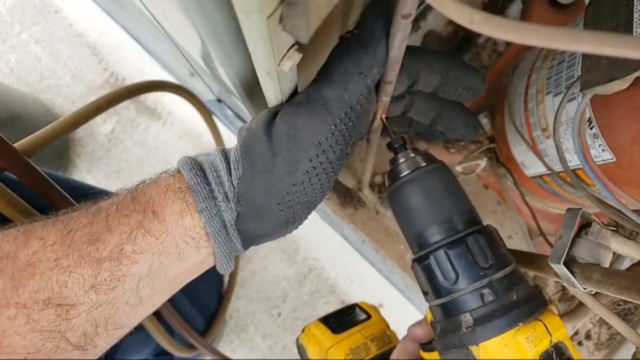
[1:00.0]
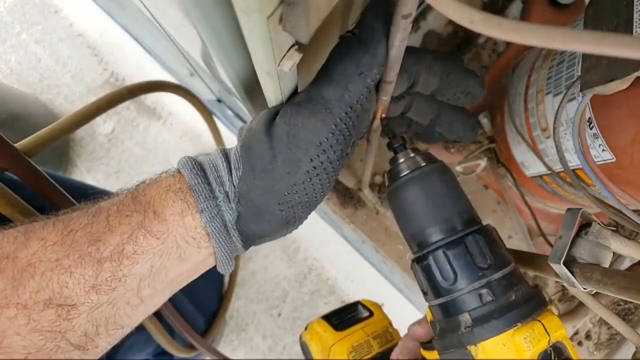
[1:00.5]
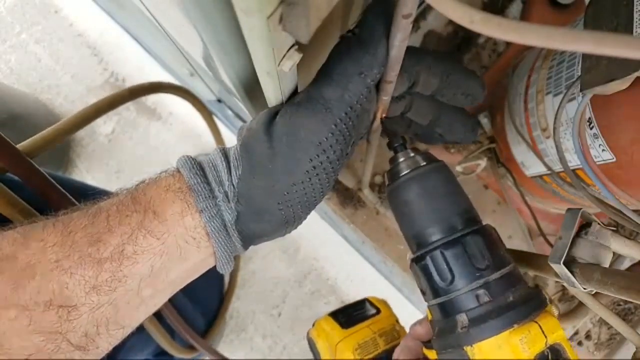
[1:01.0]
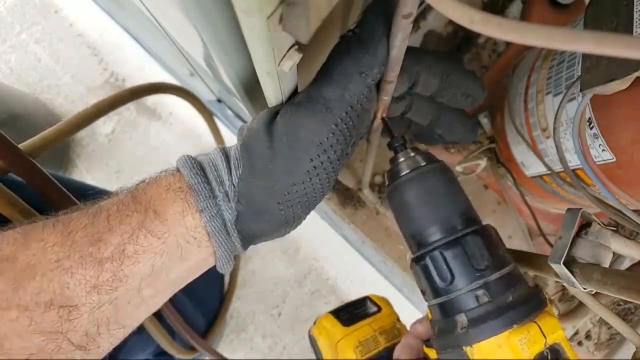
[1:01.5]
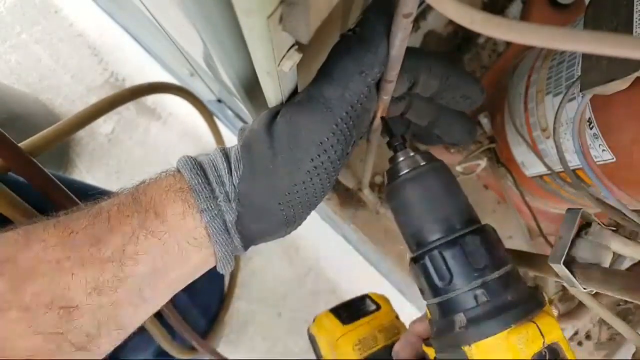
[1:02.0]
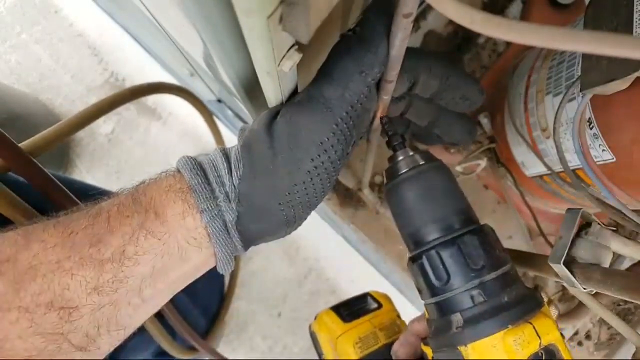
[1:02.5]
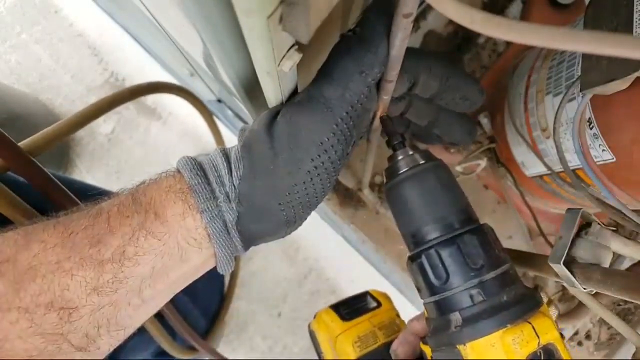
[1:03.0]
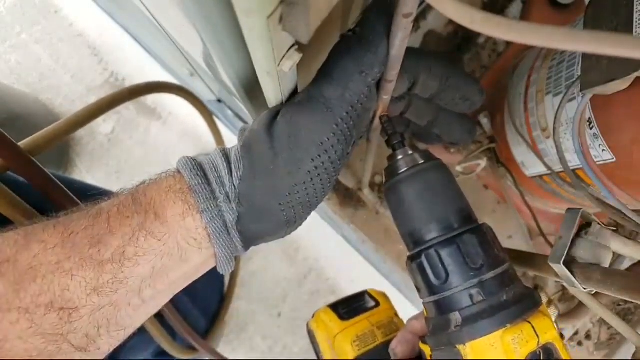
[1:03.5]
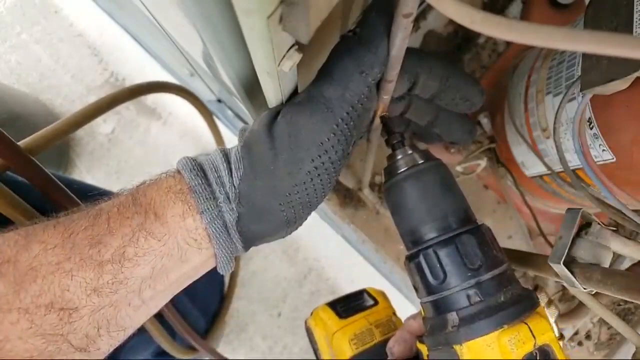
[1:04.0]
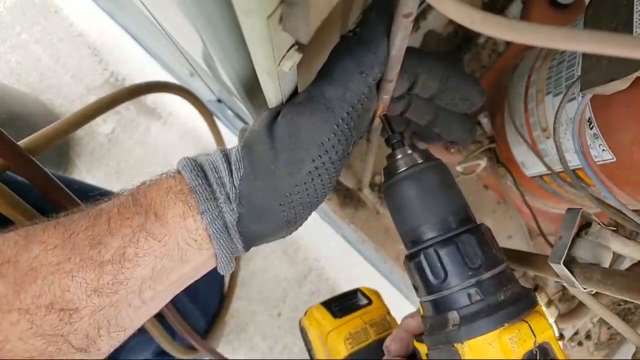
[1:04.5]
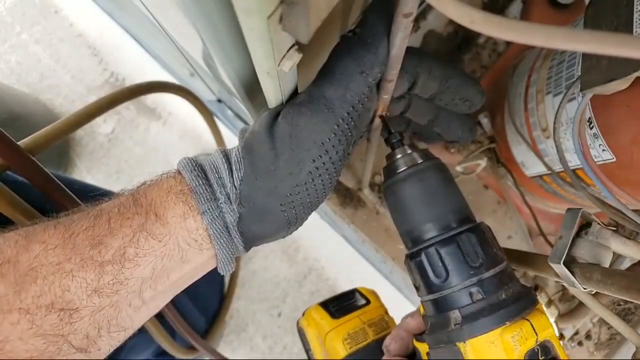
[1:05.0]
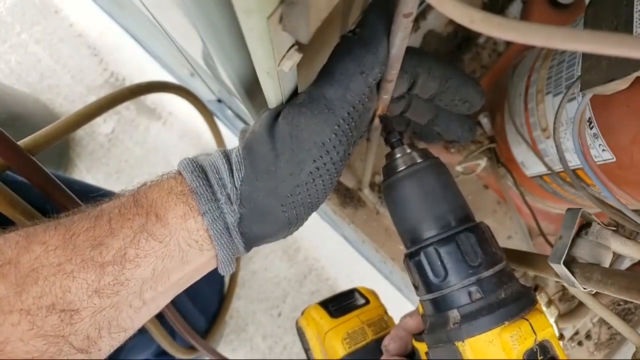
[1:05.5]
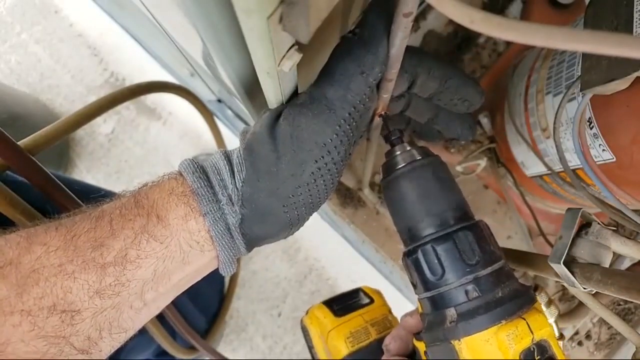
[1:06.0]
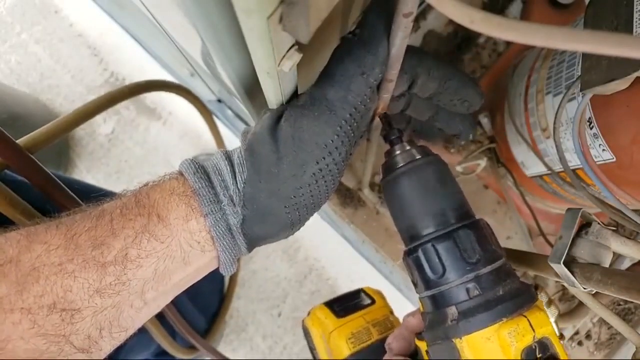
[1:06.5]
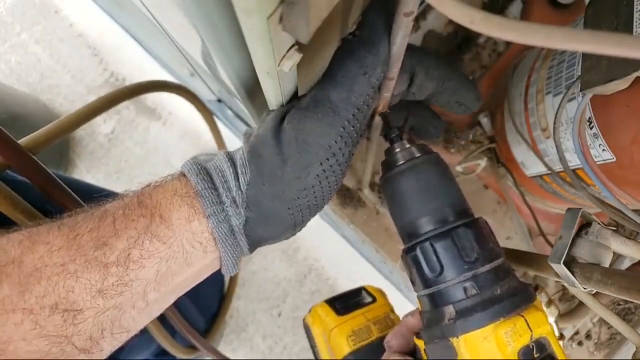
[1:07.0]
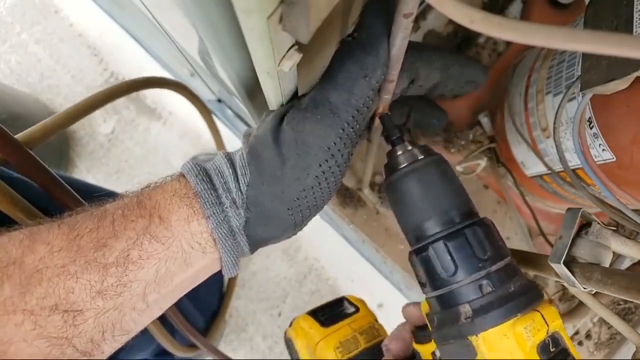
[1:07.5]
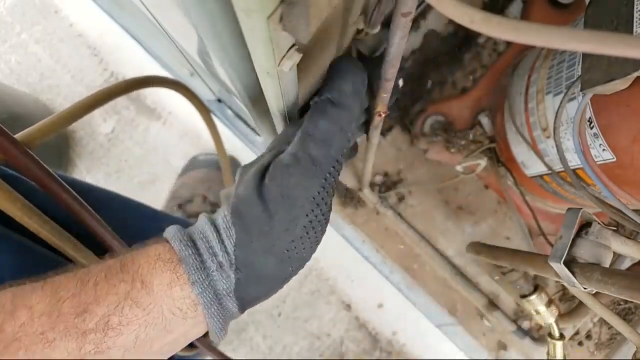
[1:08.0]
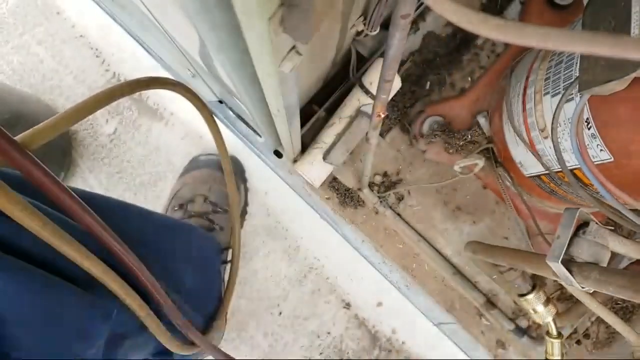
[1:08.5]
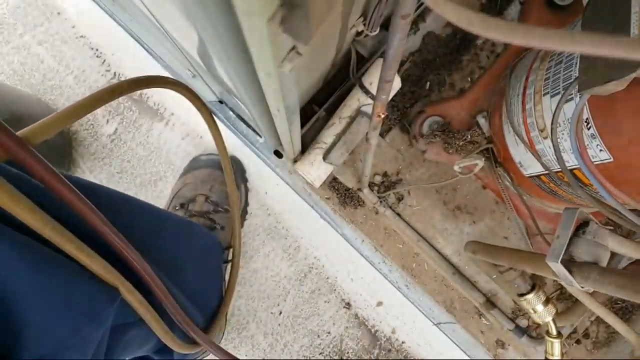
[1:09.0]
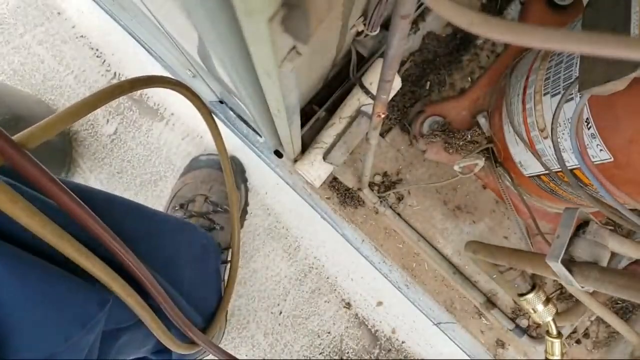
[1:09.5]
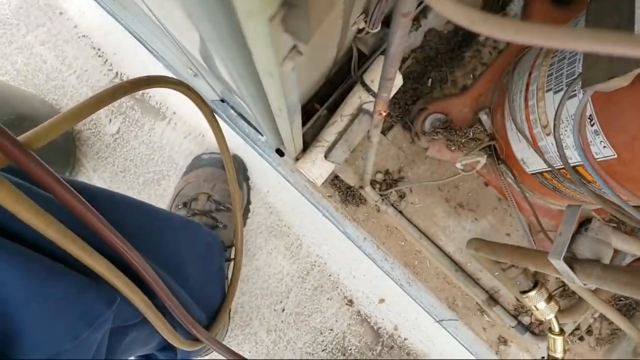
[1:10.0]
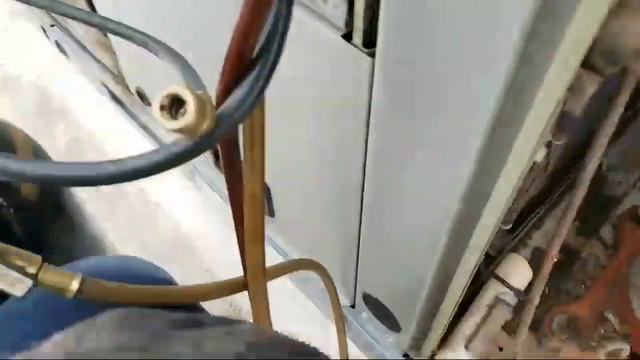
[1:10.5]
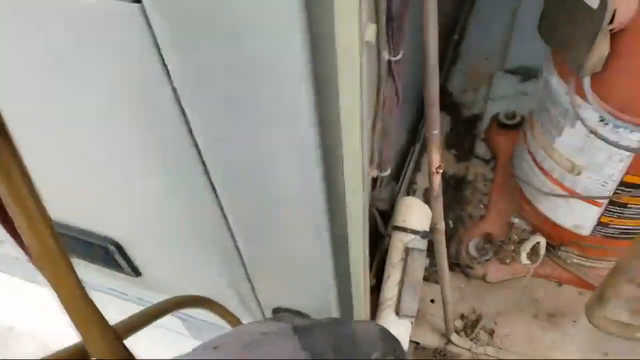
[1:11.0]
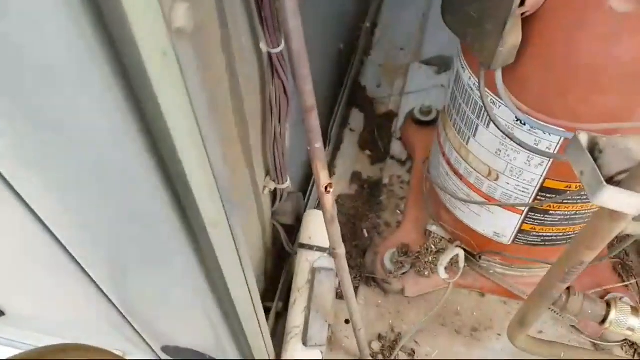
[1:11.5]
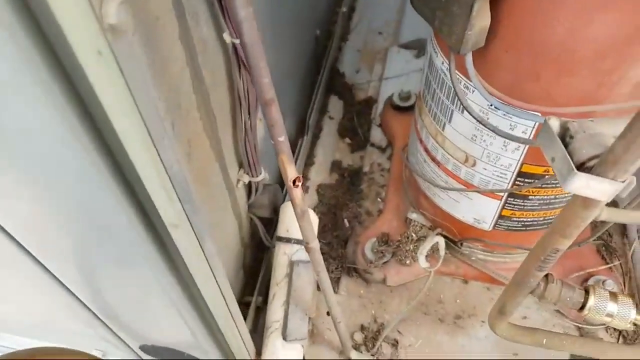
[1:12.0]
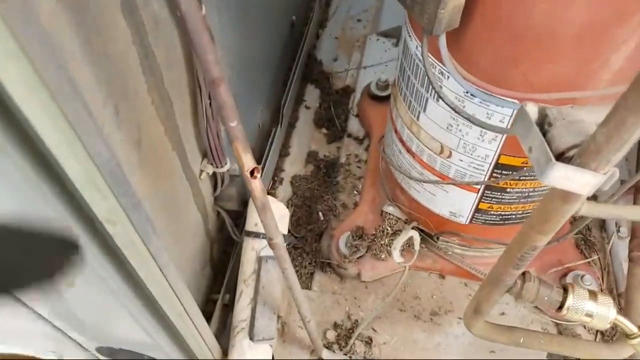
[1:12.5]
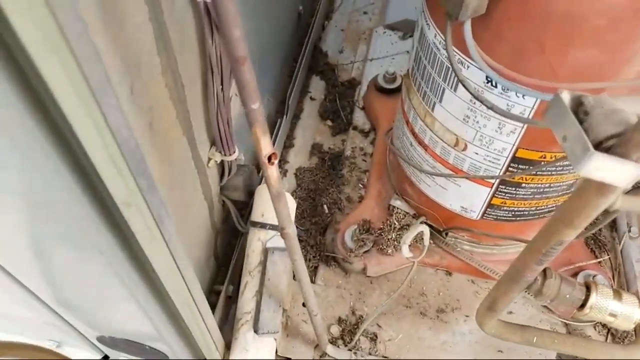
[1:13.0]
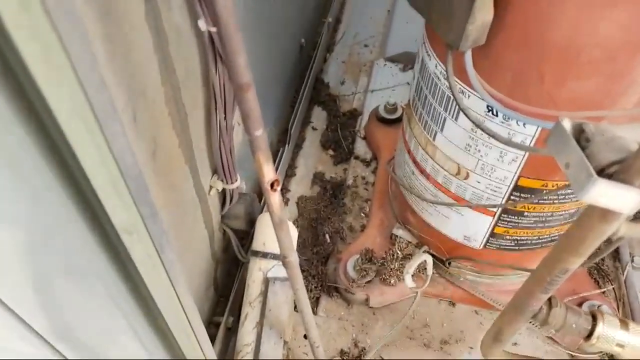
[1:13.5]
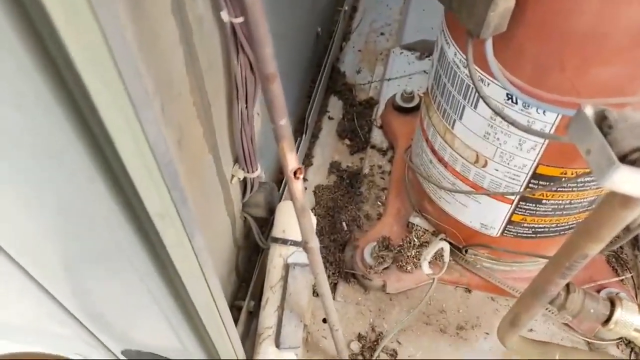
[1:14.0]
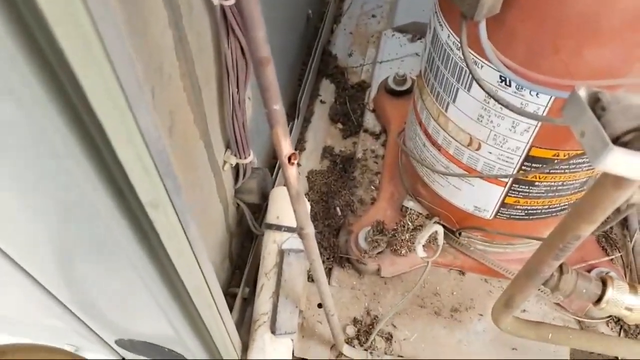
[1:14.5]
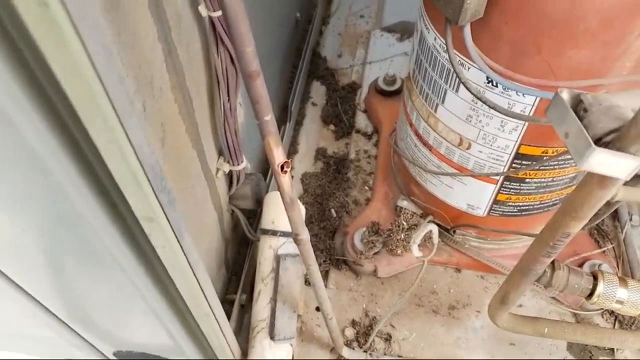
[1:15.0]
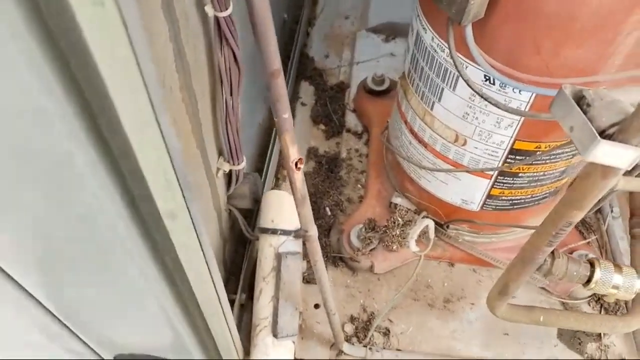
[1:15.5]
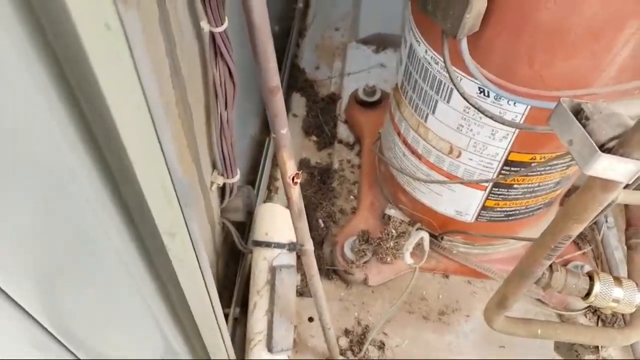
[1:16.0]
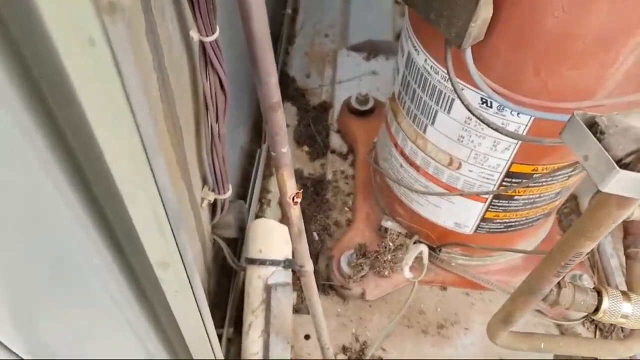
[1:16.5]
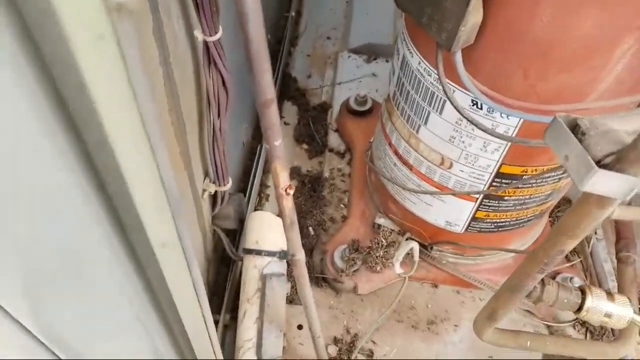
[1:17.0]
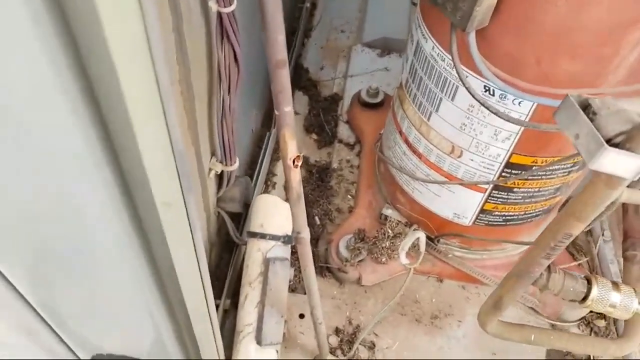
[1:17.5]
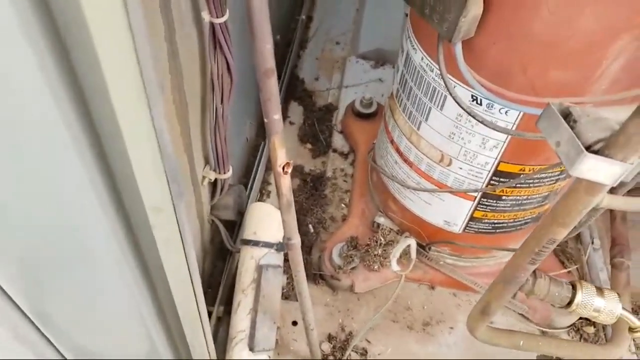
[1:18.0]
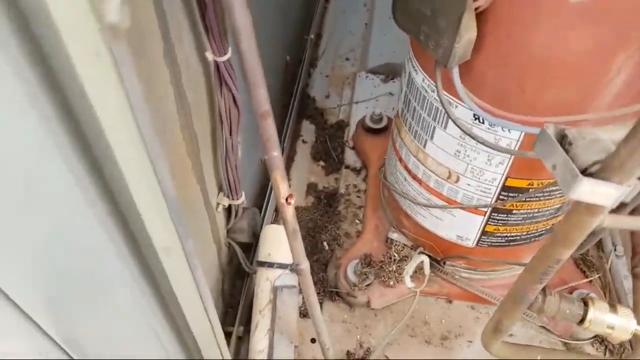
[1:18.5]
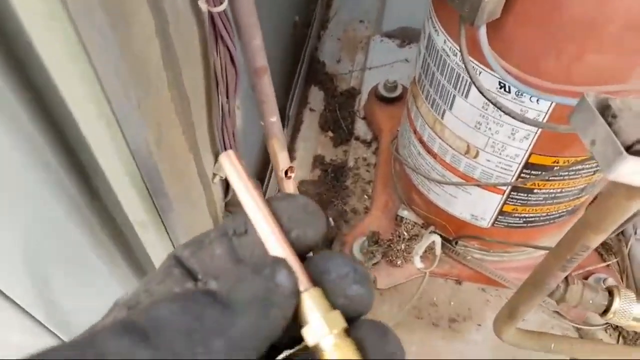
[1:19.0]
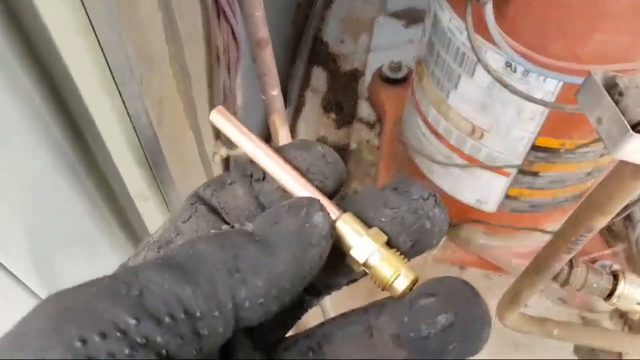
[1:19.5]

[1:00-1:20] The man wearing a black glove on his left hand holds the copper pipe from behind while the head of a black and yellow Dewalt drill is placed directly into the hole of the pipe. The drill begins spinning counterclockwise, increasing the diameter of the hole. The drill then pulls away from the pipe, and the camera pans to the left, zooming in on the hole, which is larger than before. The camera pans down briefly, showing the blue pants, the brown and black boots, and the red and yellow hoses again. The drill operator holds up to the camera a small copper tube with a brass fitting attached to the end, which has grooves in it. He holds the piece between his thumb and his pointer and middle fingers, resting the copper fitting gently on his left ring finger.